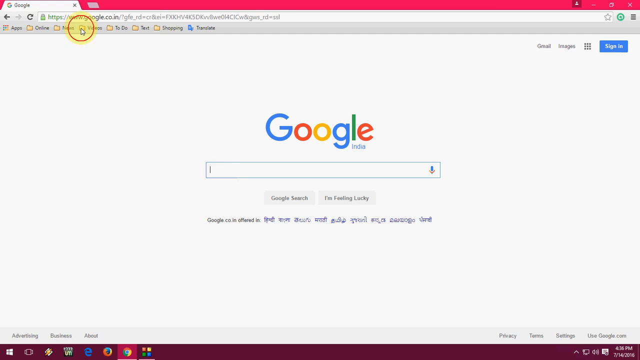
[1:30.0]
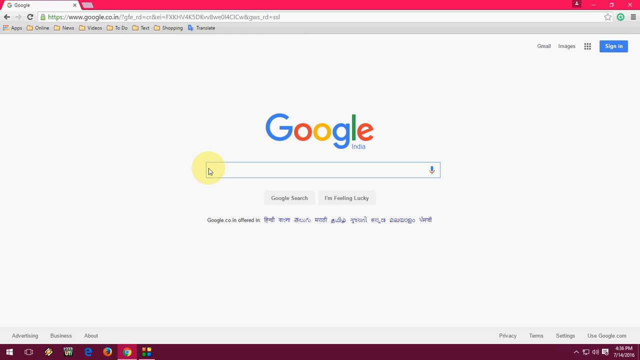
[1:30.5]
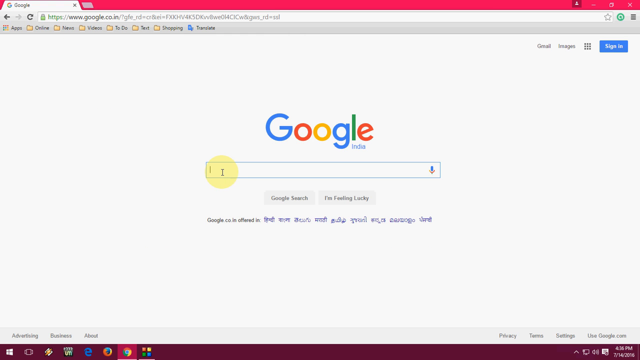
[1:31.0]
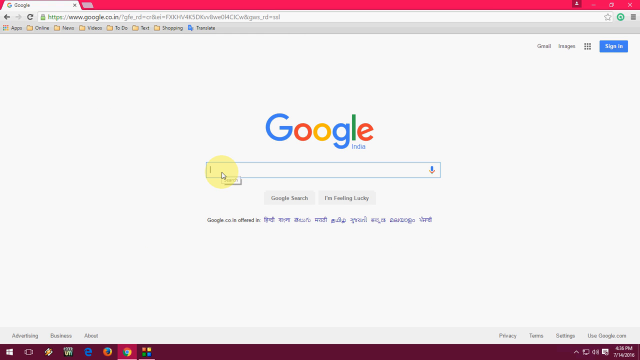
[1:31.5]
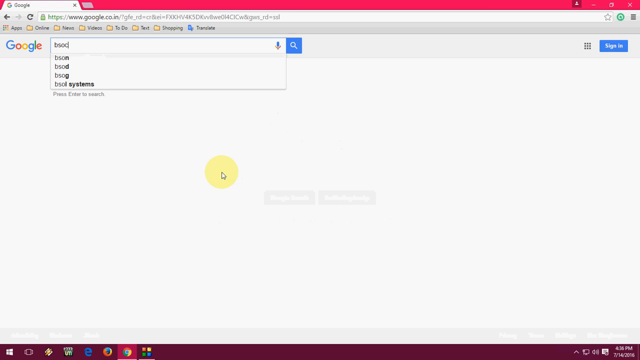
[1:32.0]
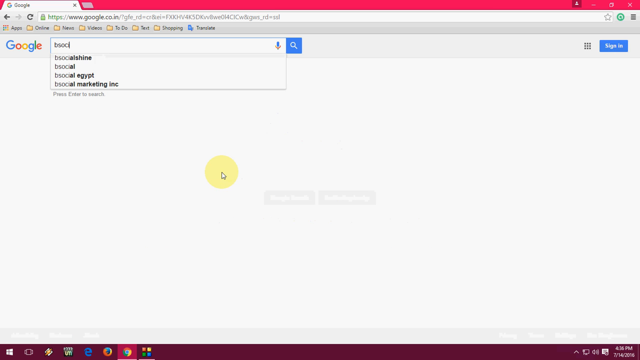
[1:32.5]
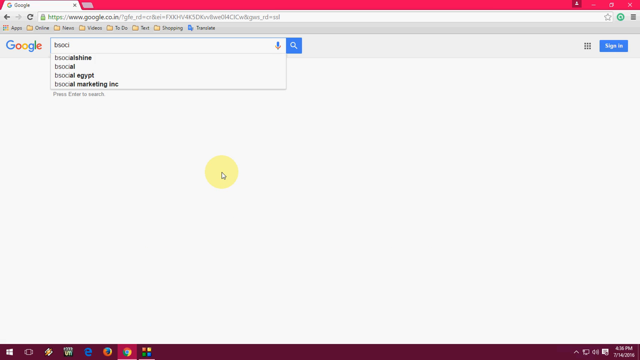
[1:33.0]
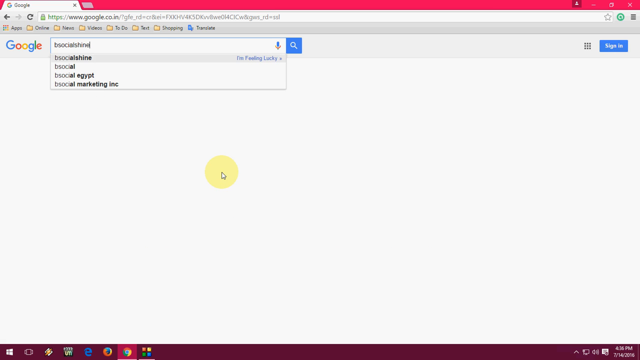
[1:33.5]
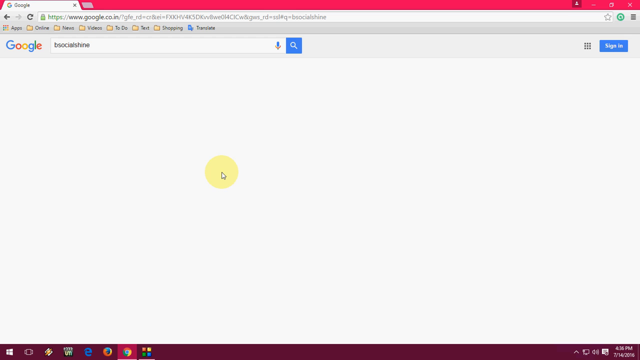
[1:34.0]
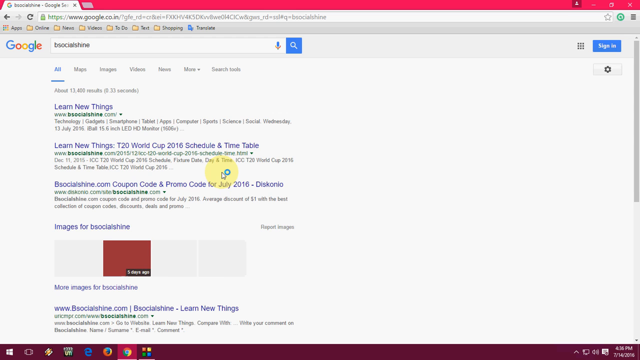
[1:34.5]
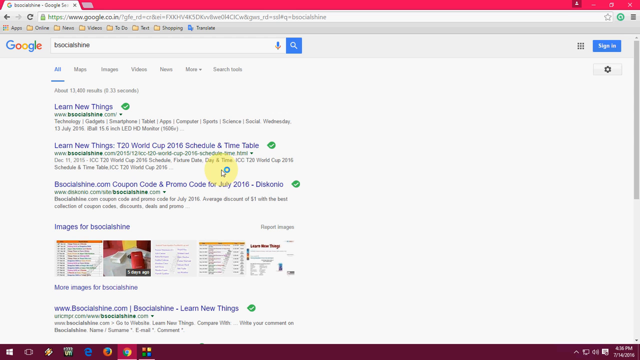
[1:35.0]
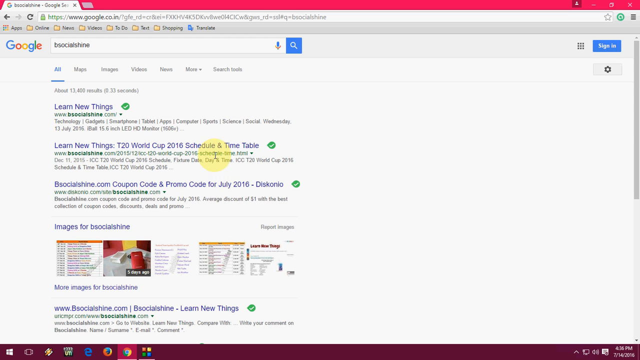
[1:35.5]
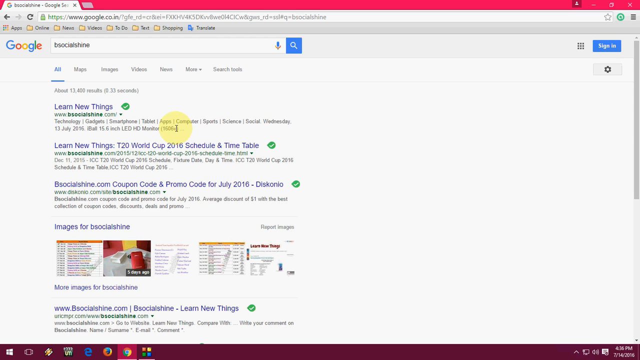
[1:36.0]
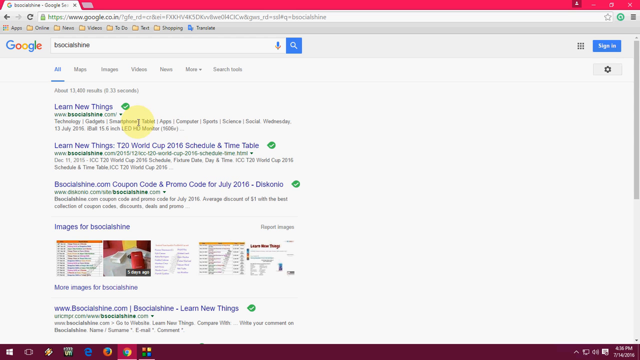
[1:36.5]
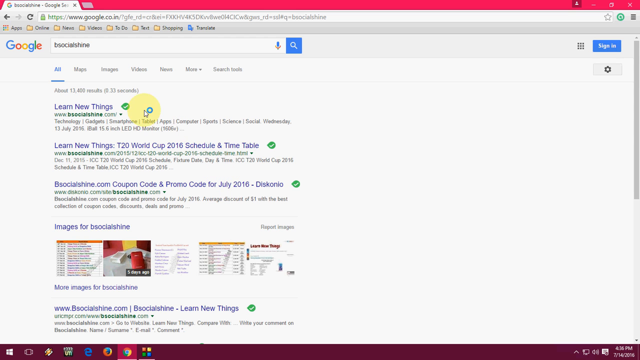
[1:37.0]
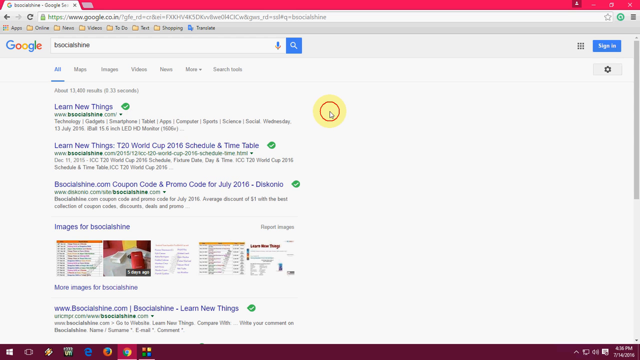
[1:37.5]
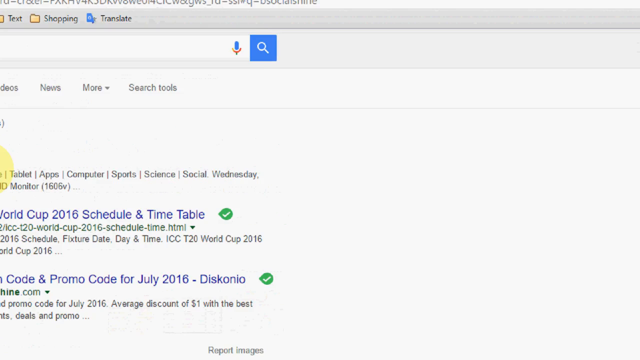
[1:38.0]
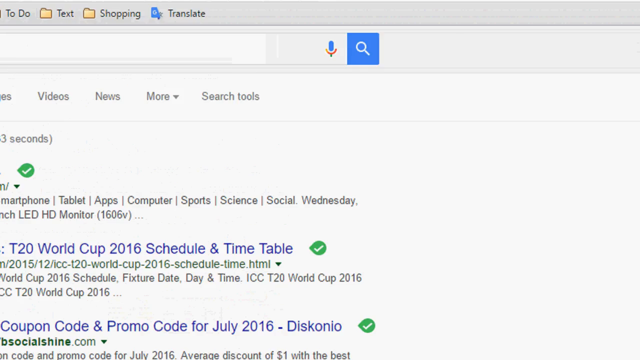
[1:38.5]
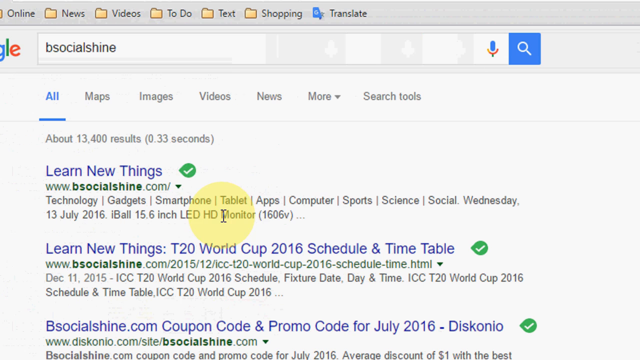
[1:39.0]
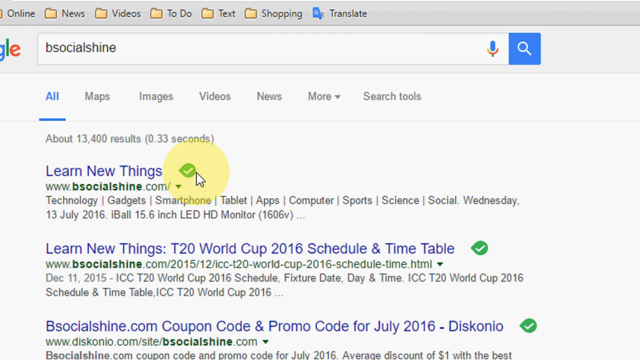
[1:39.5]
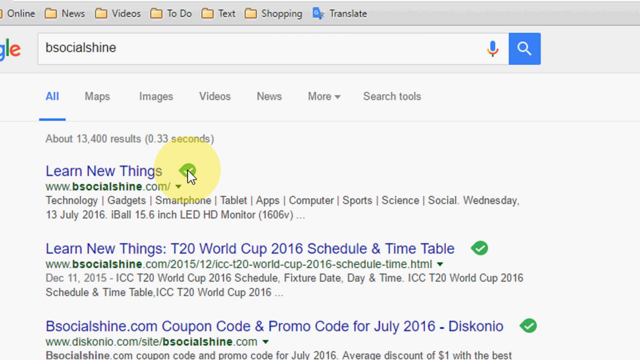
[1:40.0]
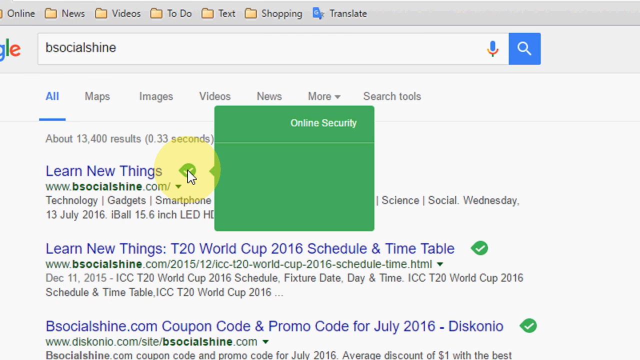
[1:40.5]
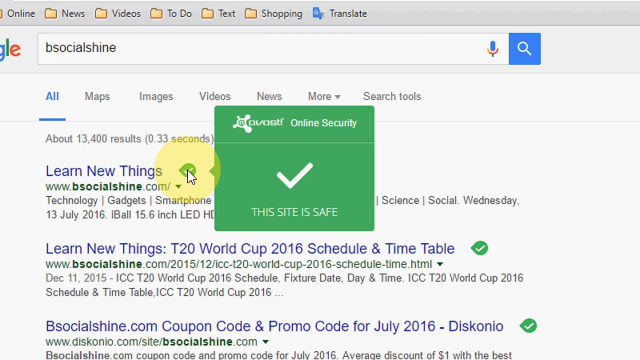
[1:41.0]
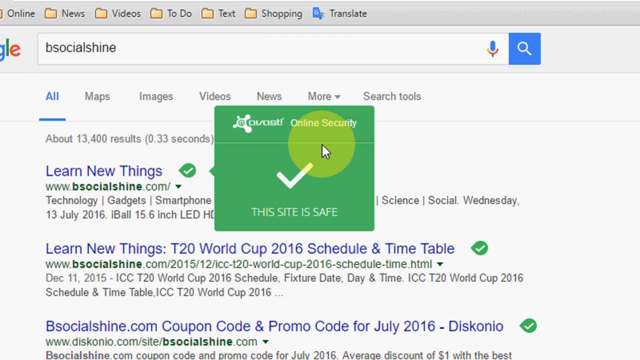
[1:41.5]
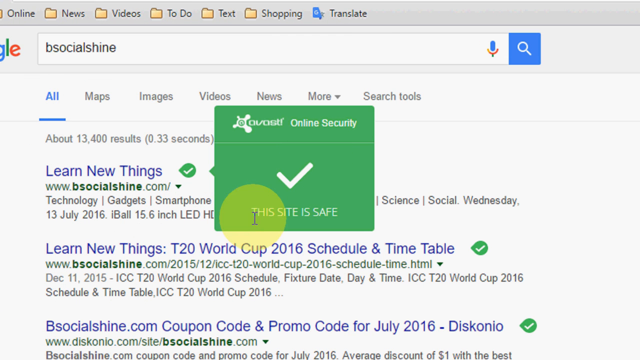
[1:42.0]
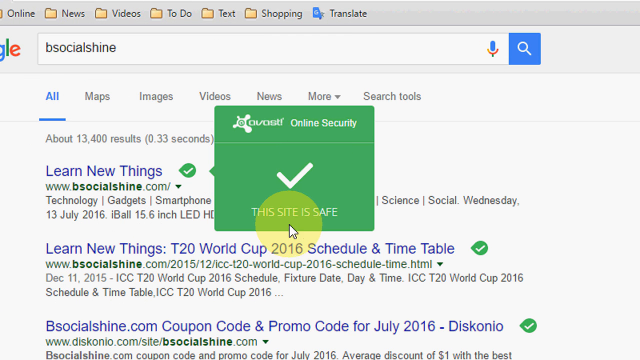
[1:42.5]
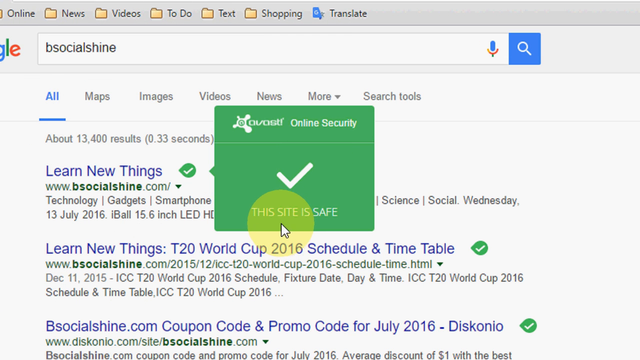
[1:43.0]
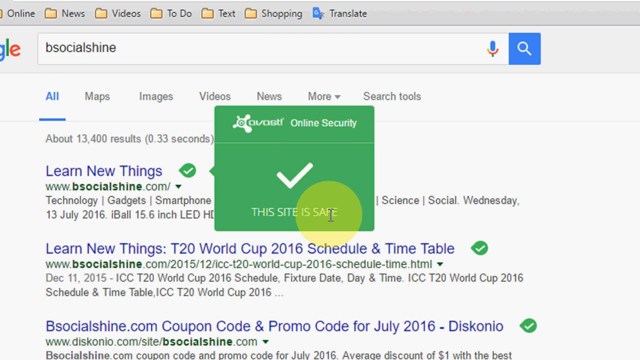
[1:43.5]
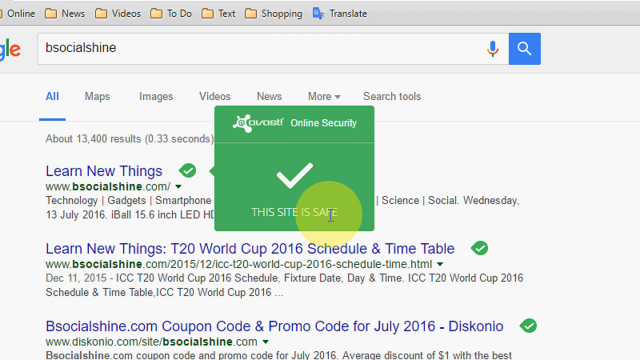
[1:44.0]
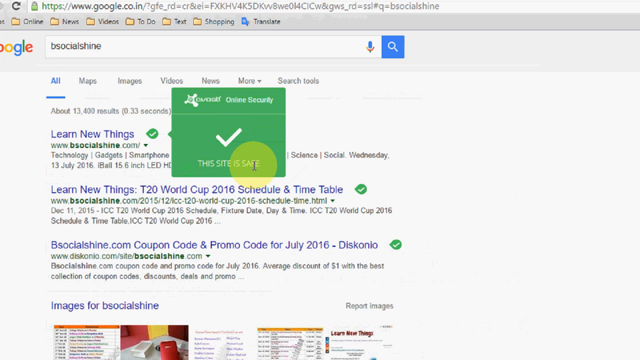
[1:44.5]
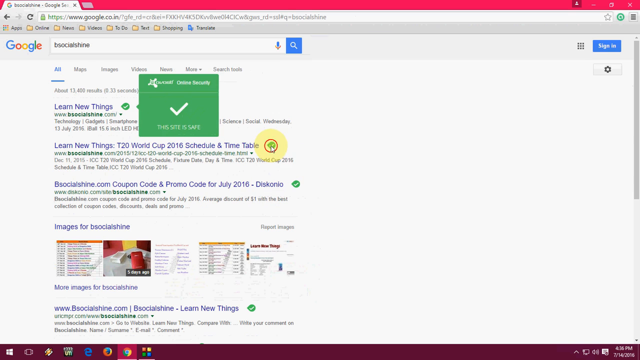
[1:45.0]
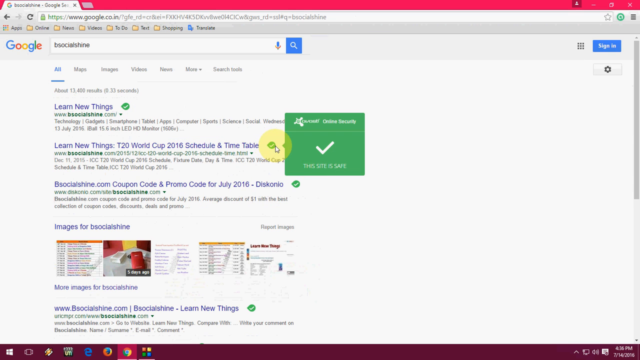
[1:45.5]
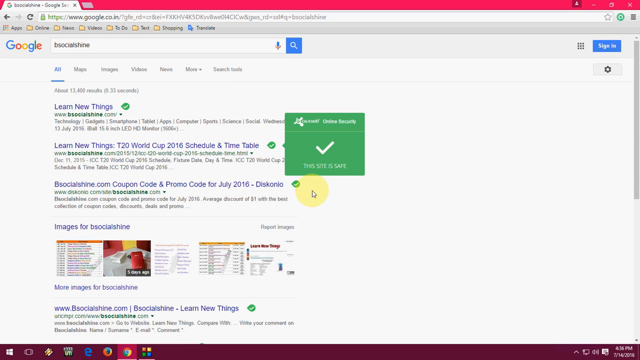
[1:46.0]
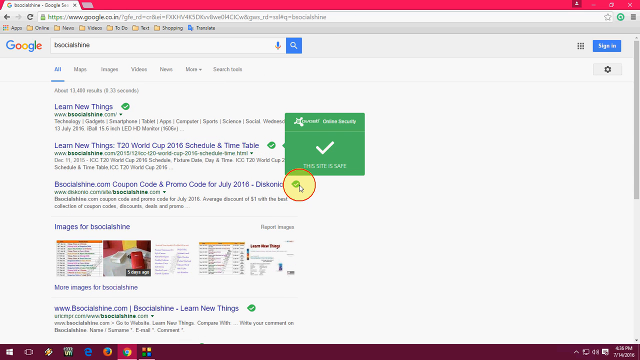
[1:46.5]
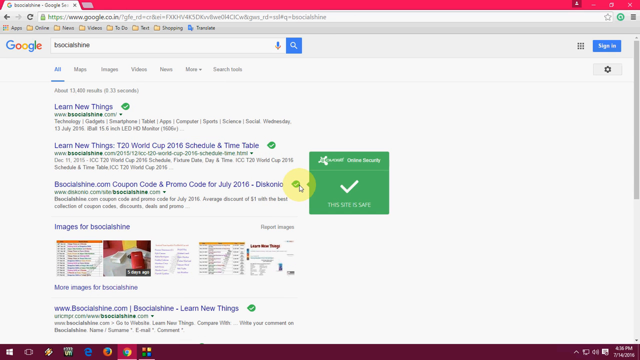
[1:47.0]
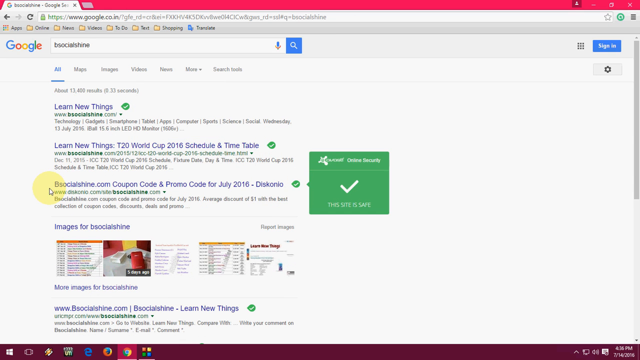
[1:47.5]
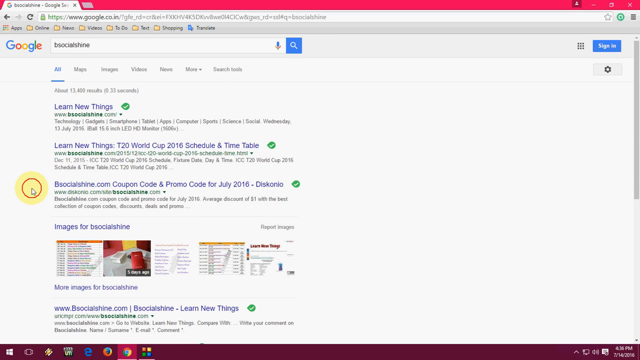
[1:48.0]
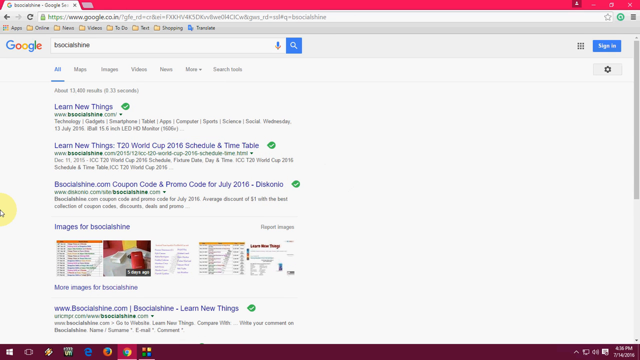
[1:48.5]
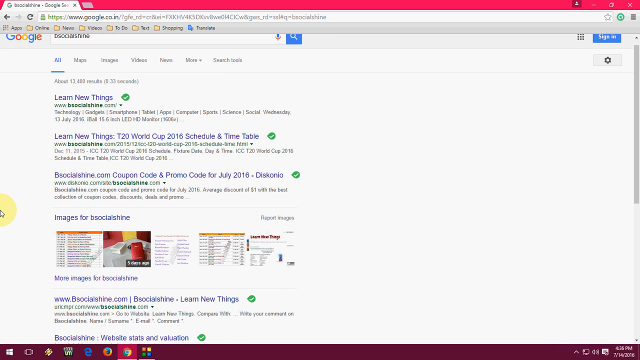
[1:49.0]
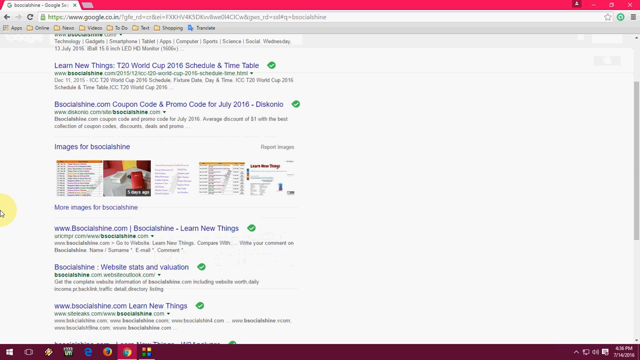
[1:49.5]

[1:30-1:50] On a Google search tab, the user types in a search for bsocialshine. When the results come up, they hover the mouse over the top two results, which show green check marks from the extension. They click on the first one and click on Avast Online Security, and a green pop-up box appears saying "this site is safe" with a check mark next to it. They hover over the words "this site is safe," then check the next two results, checking the top three items in total, each shown as safe to visit. Then they close the page.